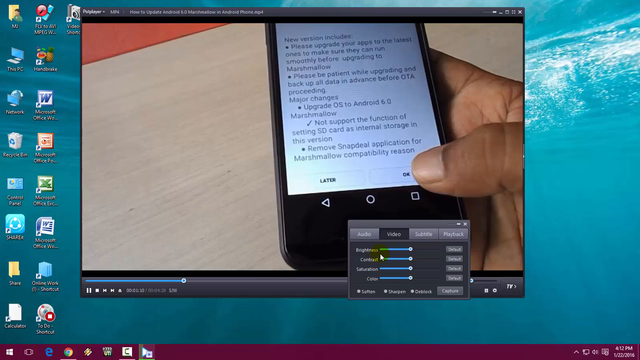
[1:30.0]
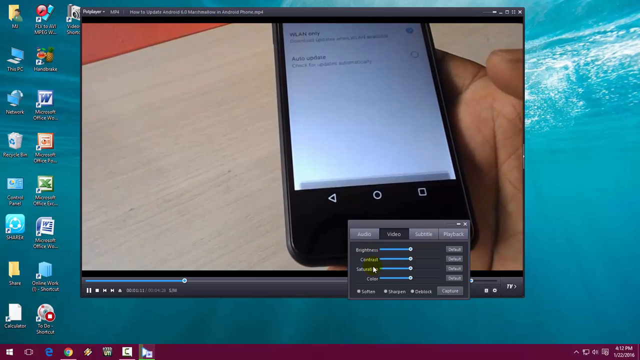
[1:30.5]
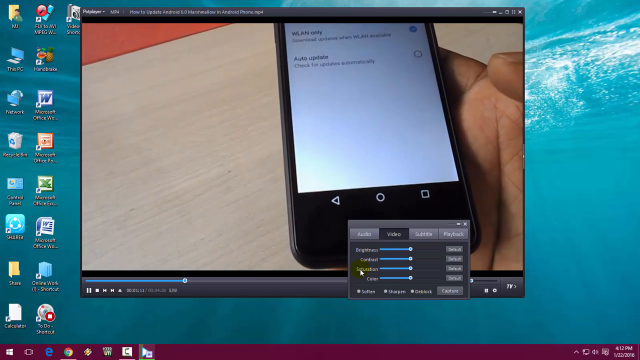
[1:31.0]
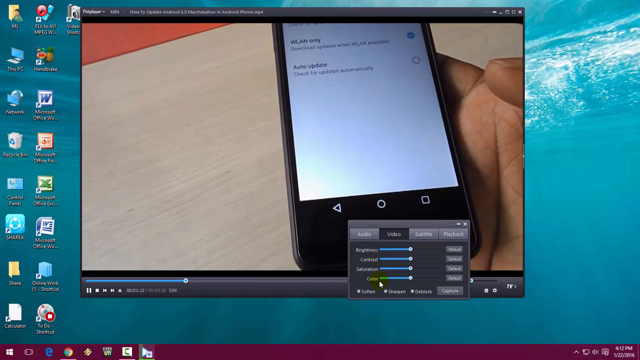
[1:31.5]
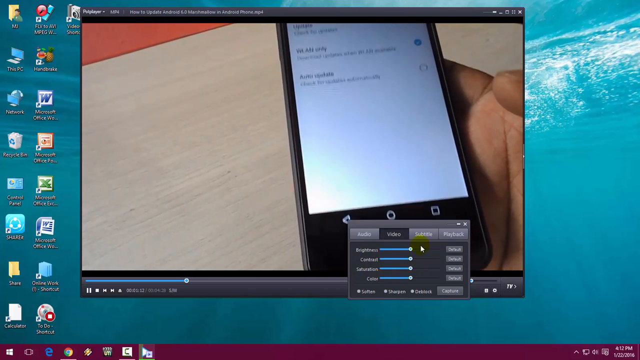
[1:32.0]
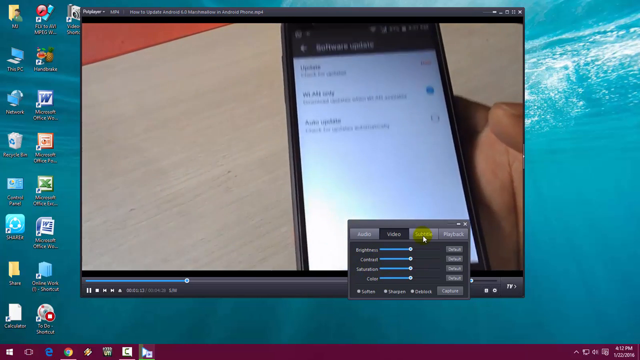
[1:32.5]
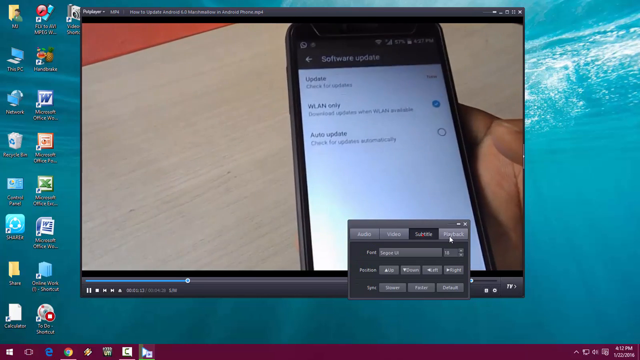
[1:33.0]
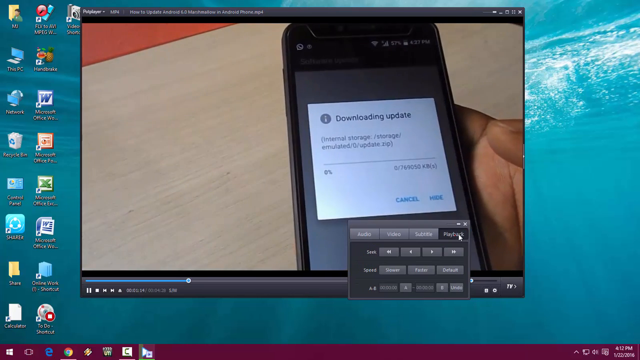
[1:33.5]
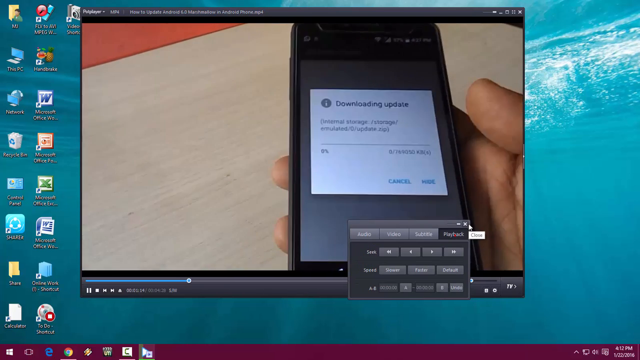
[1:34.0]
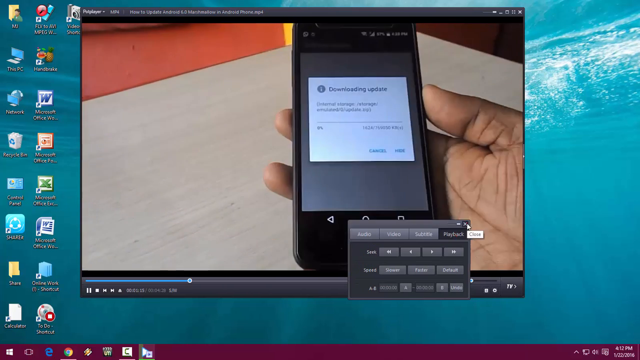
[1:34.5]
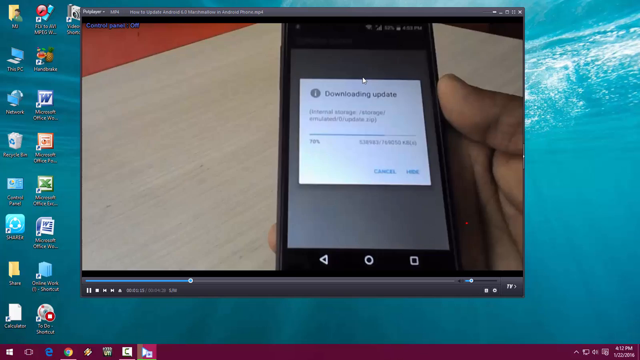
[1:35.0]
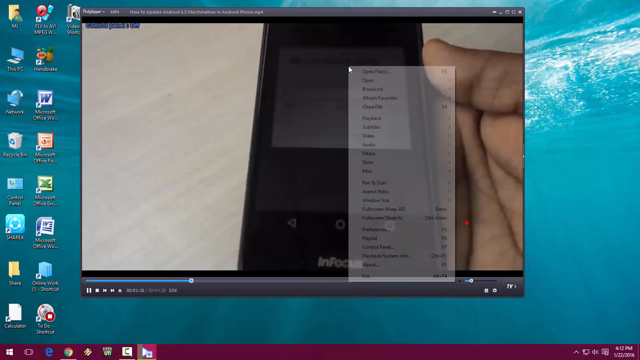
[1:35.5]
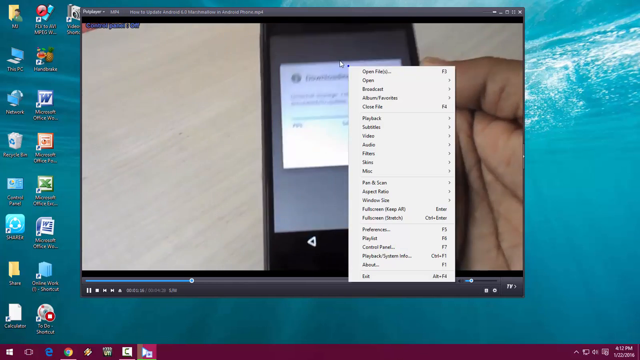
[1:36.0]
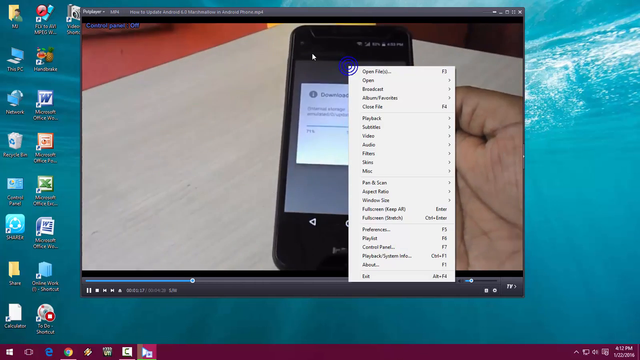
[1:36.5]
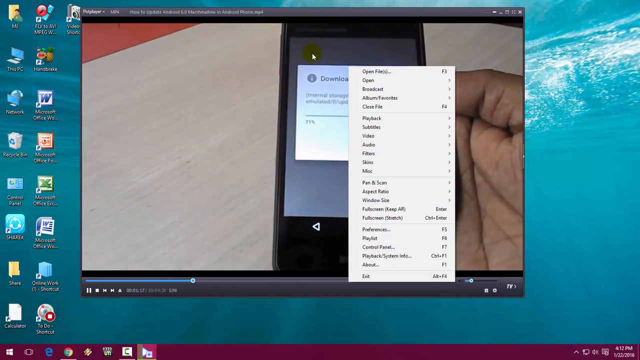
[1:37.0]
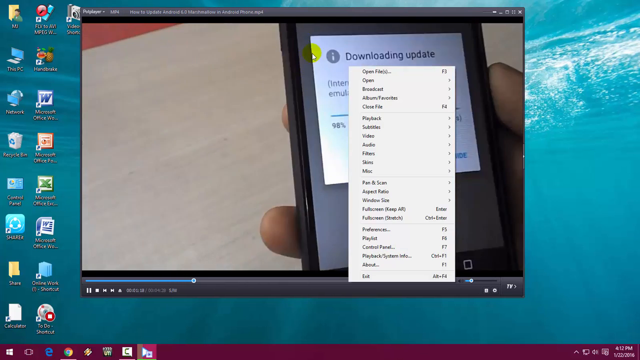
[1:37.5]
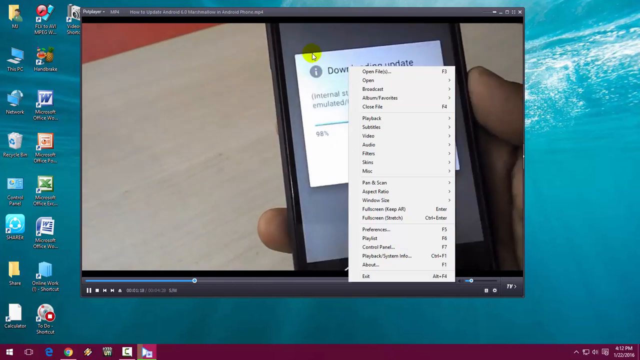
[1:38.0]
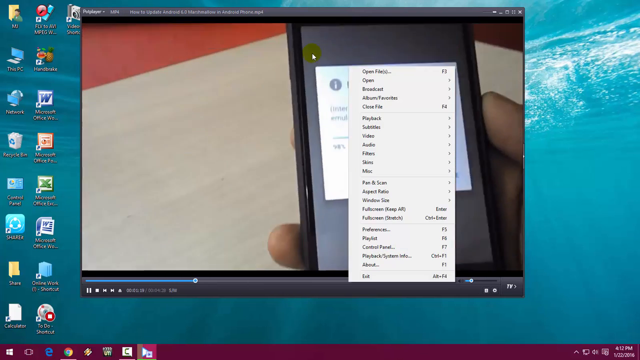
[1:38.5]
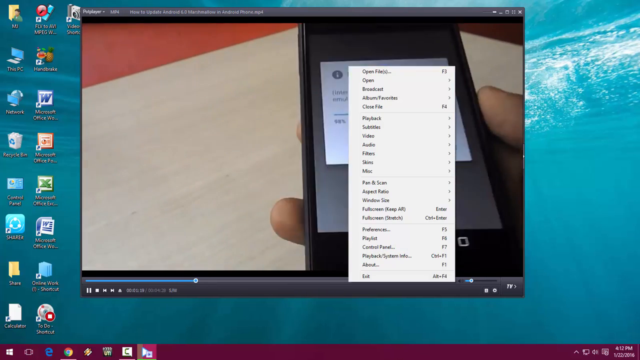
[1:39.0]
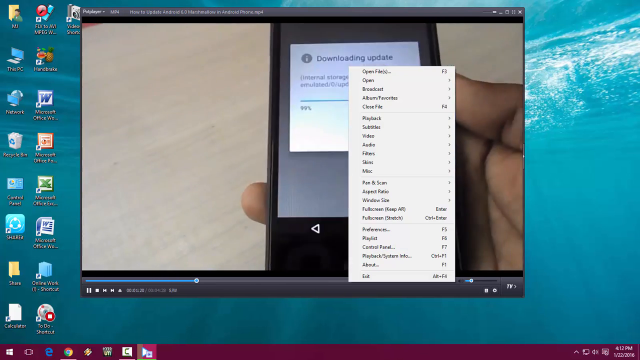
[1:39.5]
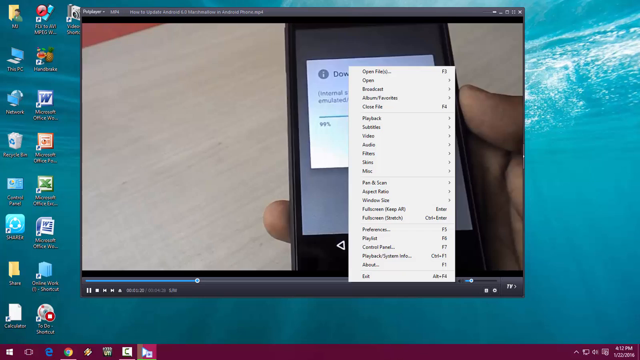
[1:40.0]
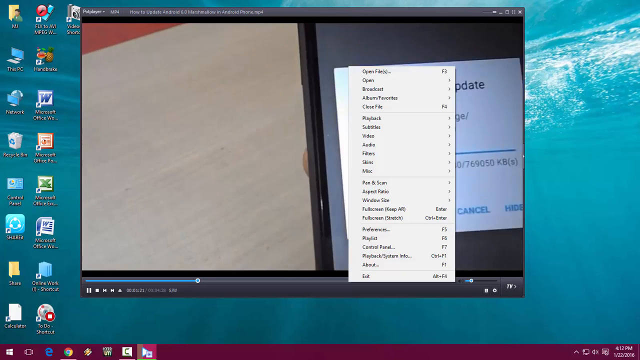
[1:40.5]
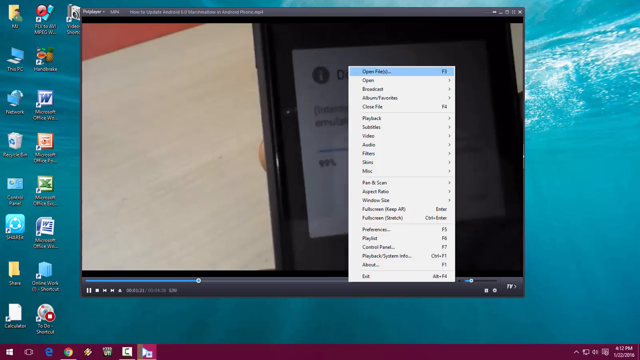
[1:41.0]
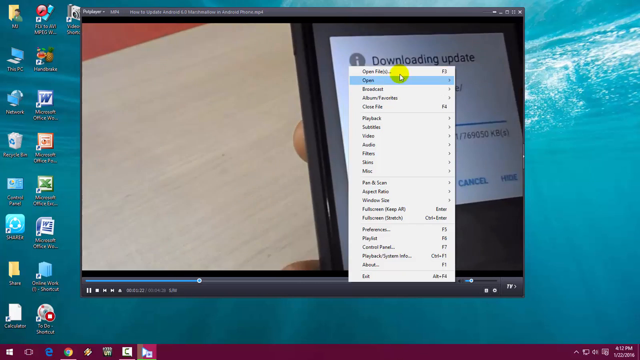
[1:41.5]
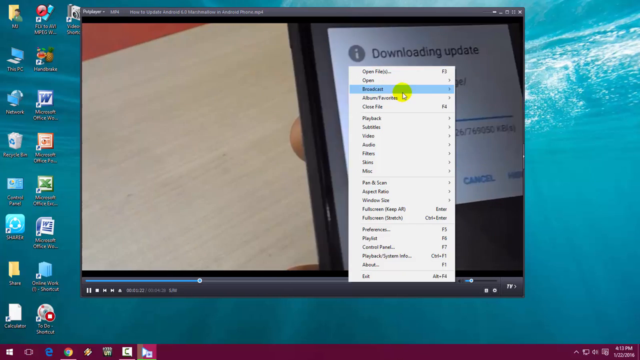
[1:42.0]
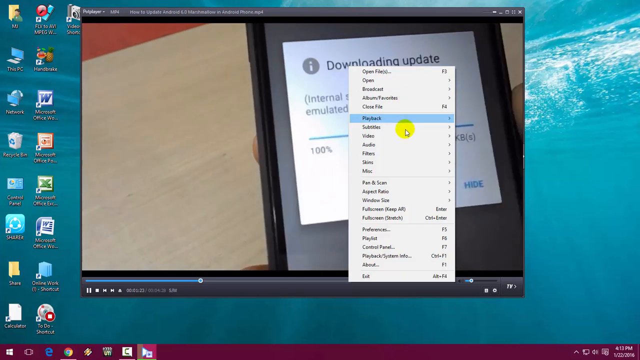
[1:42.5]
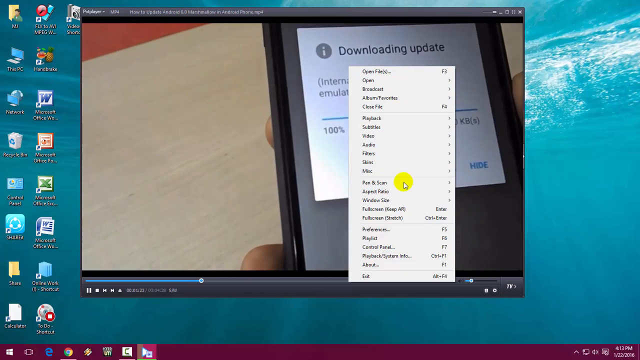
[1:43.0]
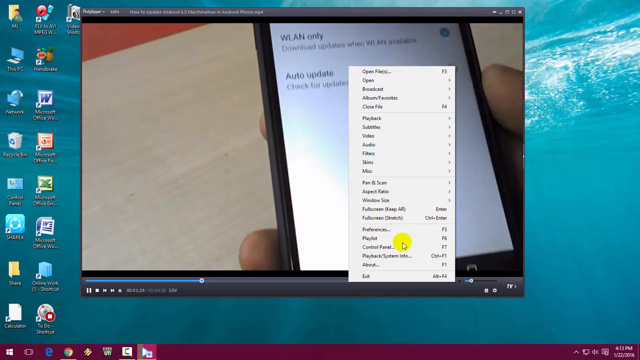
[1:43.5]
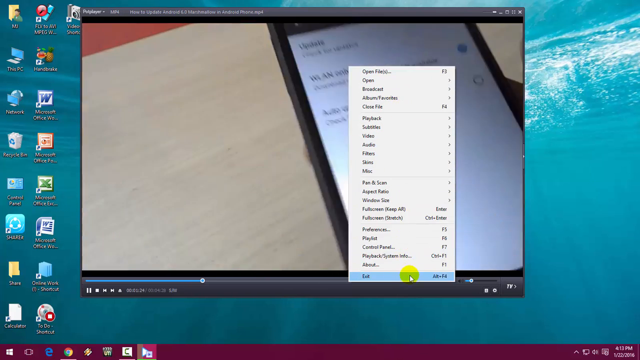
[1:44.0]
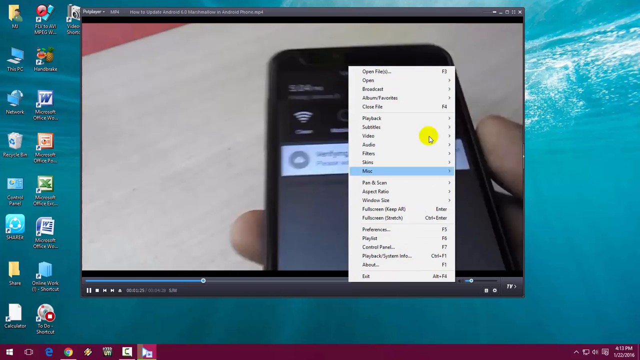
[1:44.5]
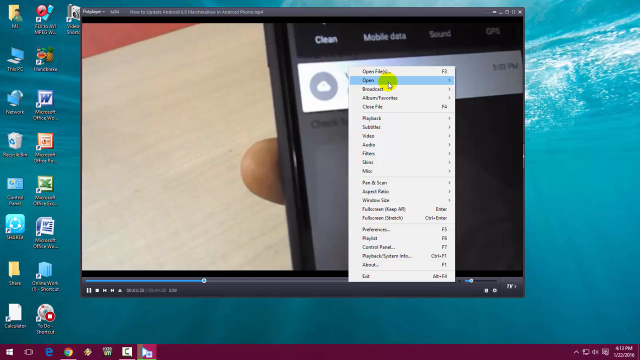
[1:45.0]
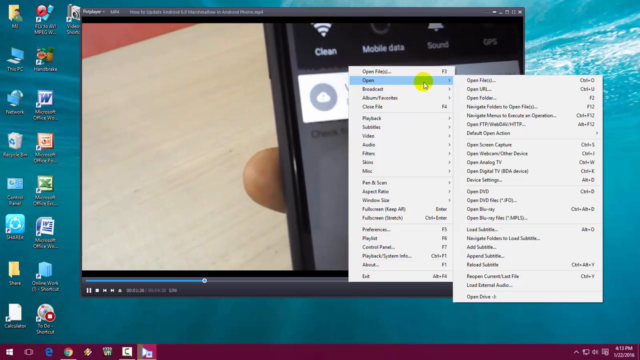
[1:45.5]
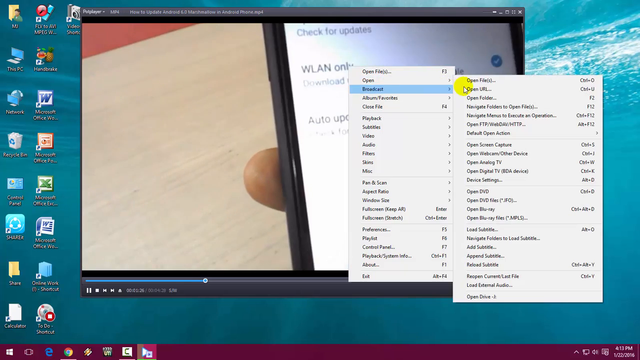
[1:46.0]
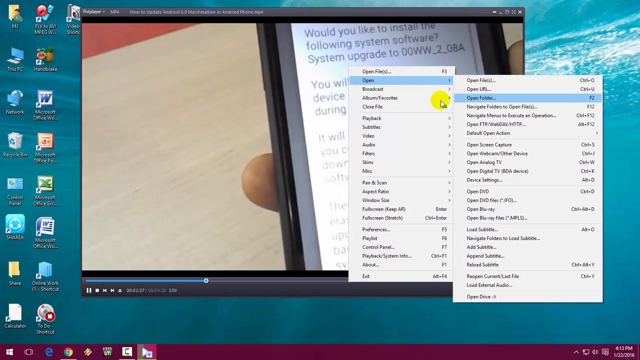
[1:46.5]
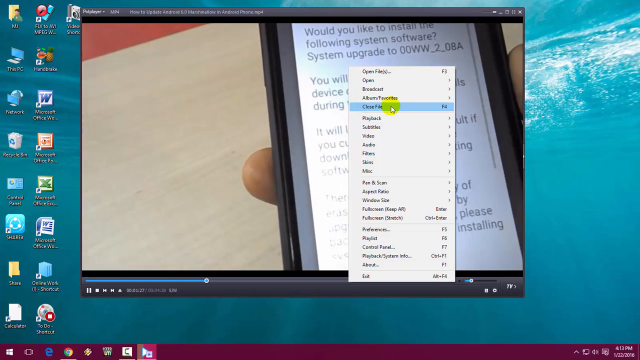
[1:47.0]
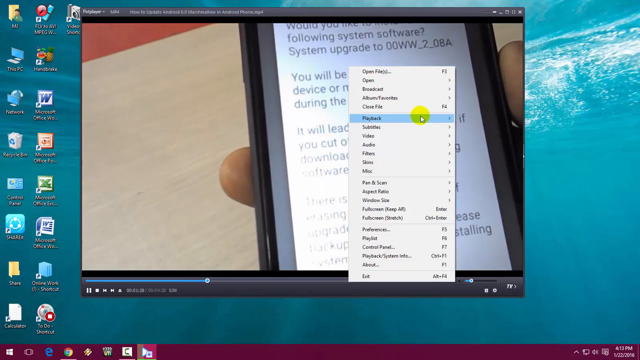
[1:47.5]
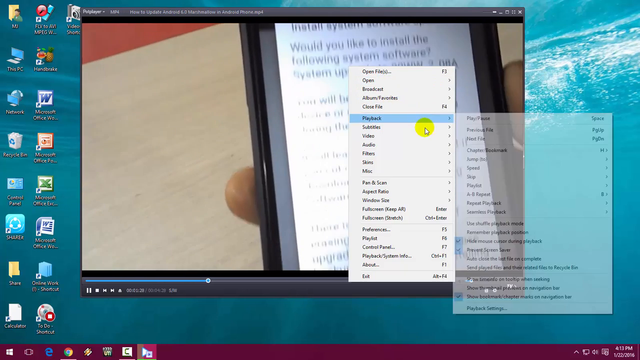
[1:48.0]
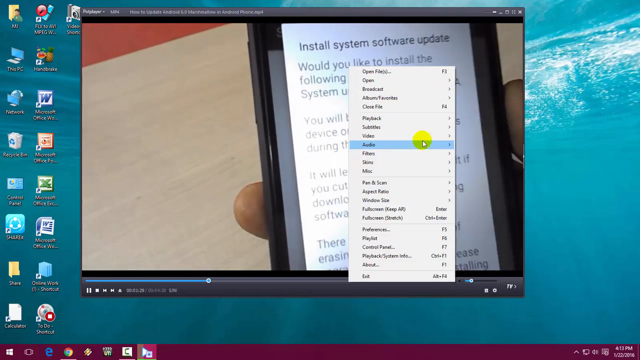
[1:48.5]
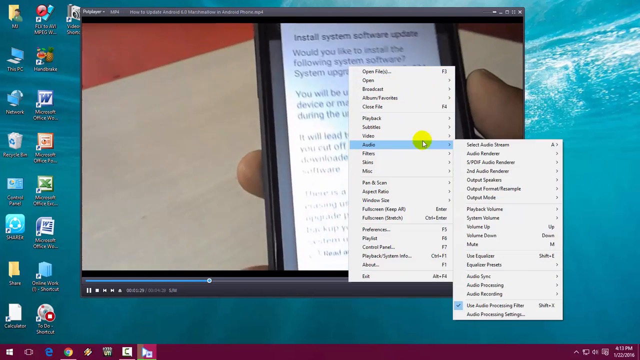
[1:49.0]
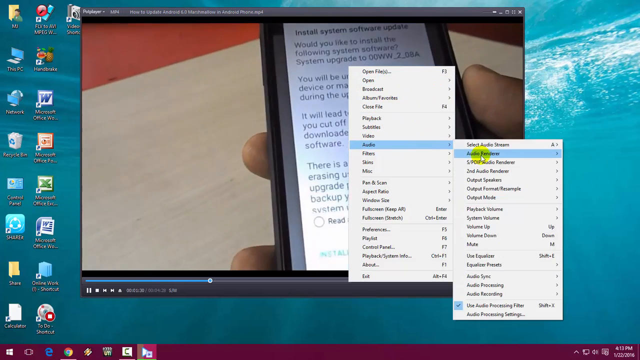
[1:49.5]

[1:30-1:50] A video is open in the PotPlayer video player, showing a close-up of someone holding a smartphone and going through some of the system options. At the bottom of the player, a rectangular control panel box is open with horizontal sliders for brightness, contrast, saturation and color. The cursor hovers over each option, moving downward, without making any adjustments. It then goes to the next tab, "Subtitle", then clicks Playback, and then clicks the Close button at the top right. The video of the person going through the settings on their phone keeps playing in the background. The cursor right-clicks on the video and a large menu pops up; the menu is scrolled down and back up, and the broadcast option is clicked, opening a submenu on the right. The cursor kind of goes back to the menu and clicks the audio option, which opens another submenu on the right. From that submenu, the second option, beginning with "Audio", opens another submenu on the left, where the second option, "default direct sound device", is clicked.